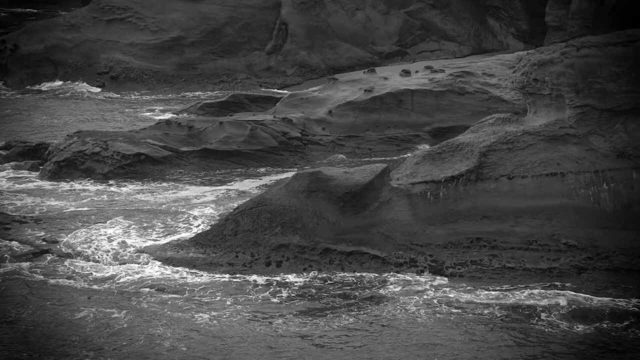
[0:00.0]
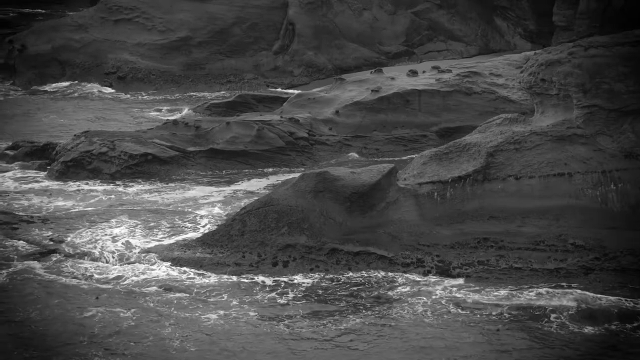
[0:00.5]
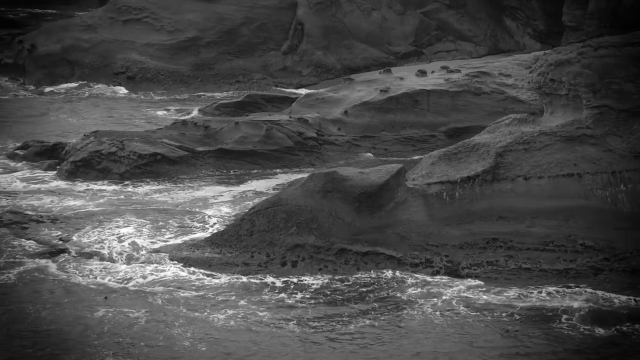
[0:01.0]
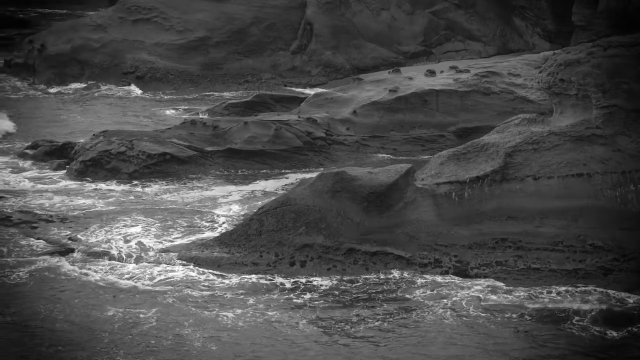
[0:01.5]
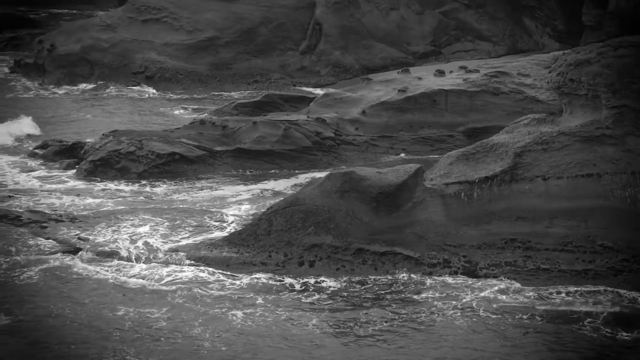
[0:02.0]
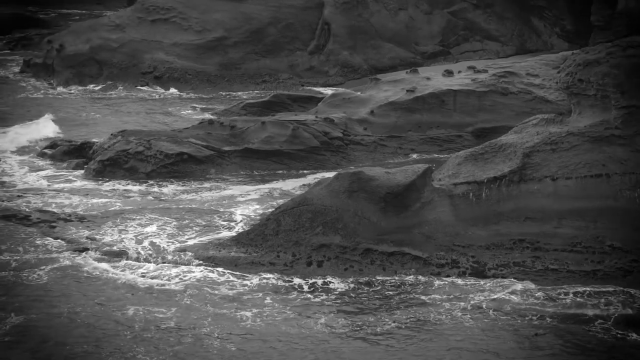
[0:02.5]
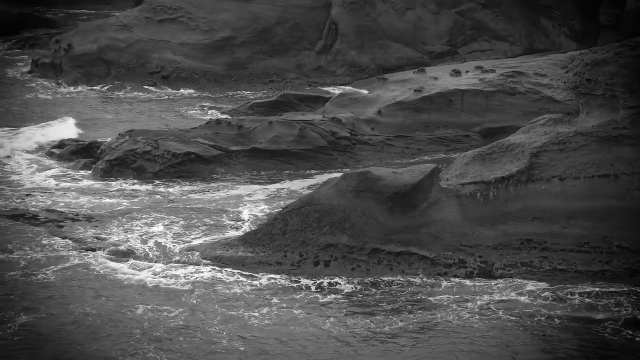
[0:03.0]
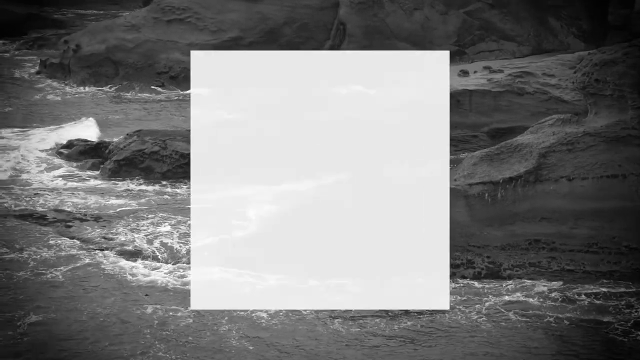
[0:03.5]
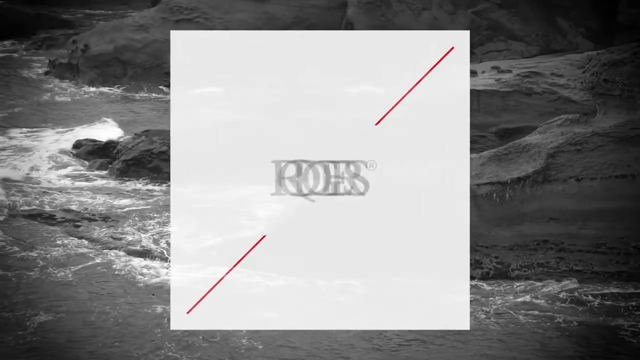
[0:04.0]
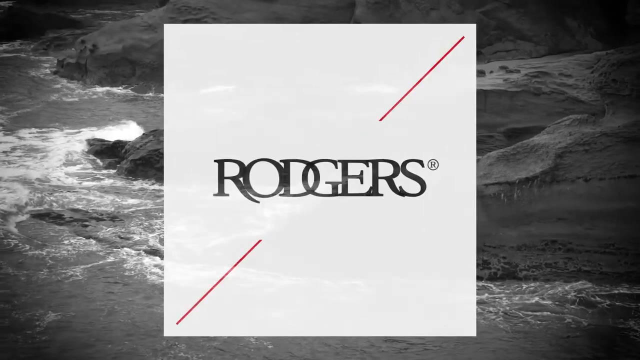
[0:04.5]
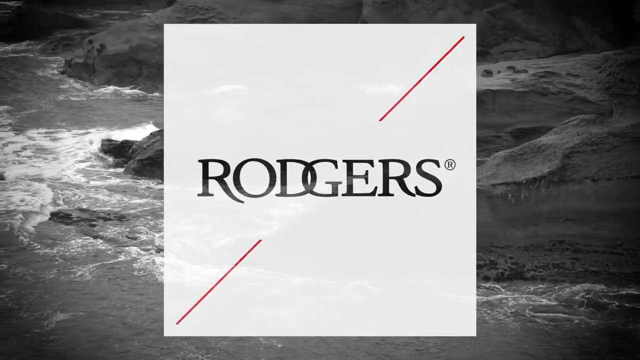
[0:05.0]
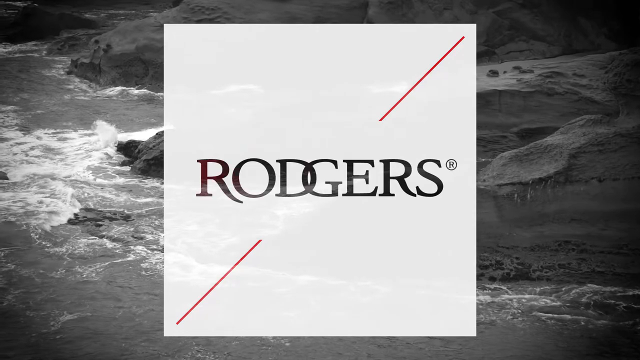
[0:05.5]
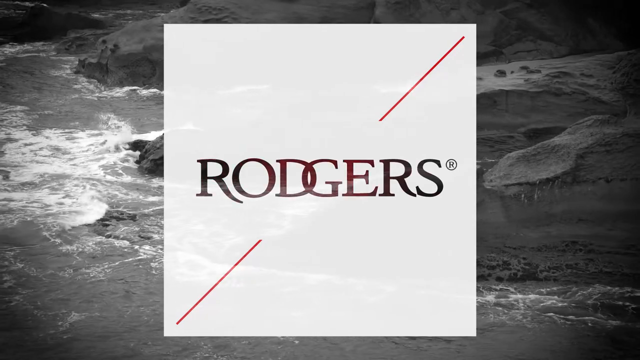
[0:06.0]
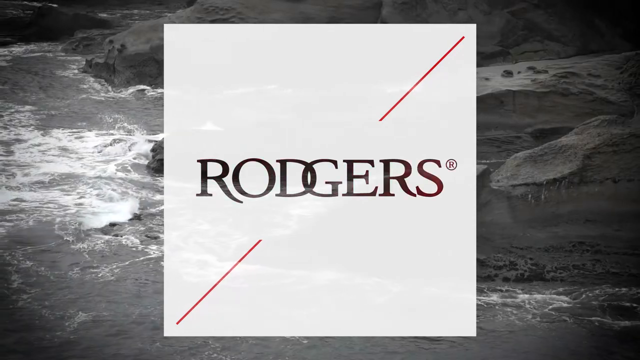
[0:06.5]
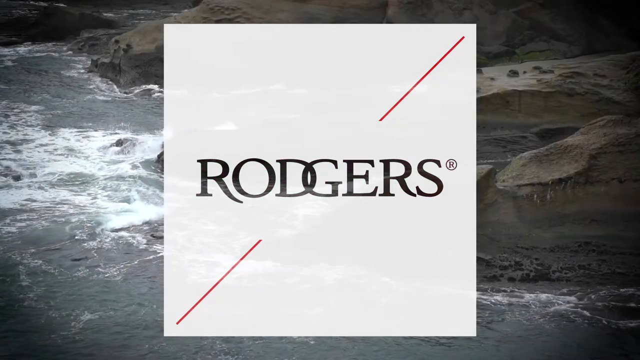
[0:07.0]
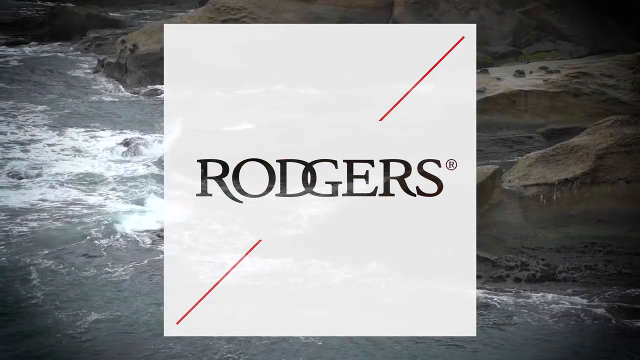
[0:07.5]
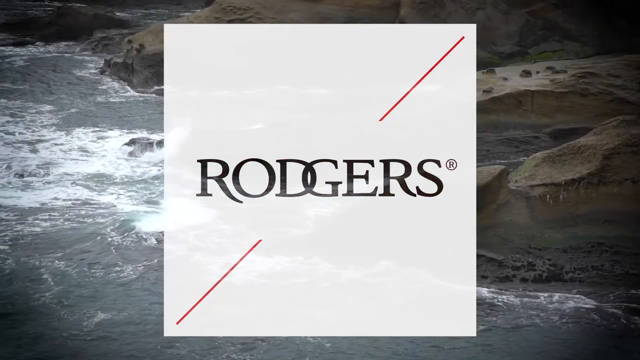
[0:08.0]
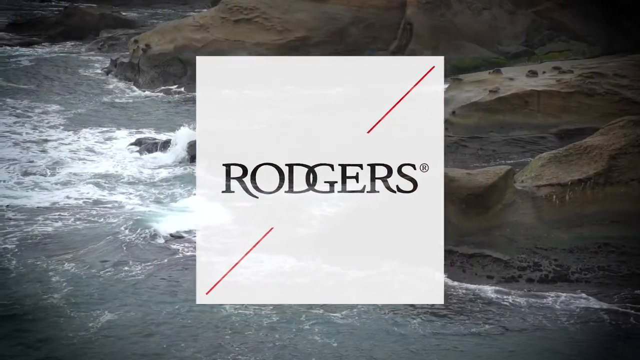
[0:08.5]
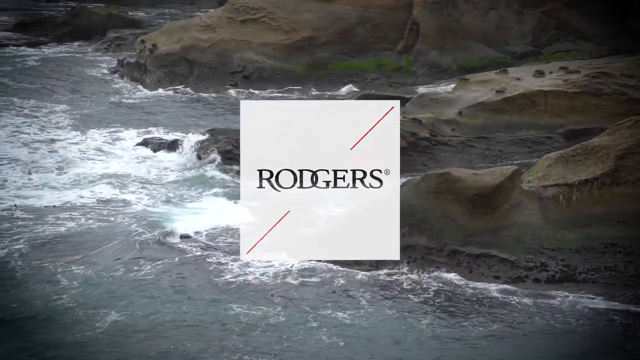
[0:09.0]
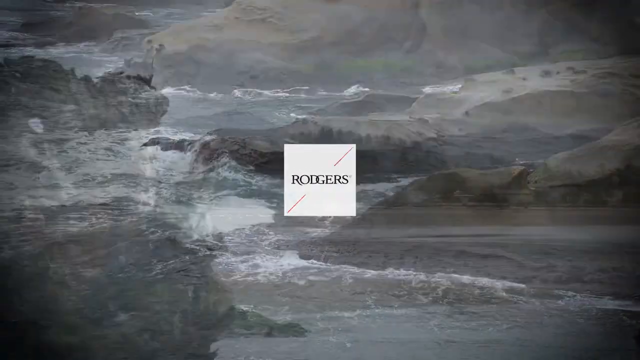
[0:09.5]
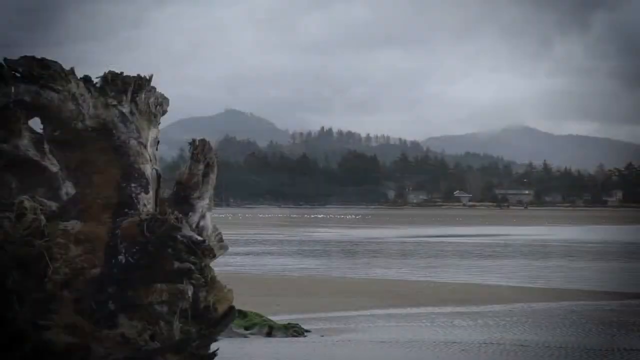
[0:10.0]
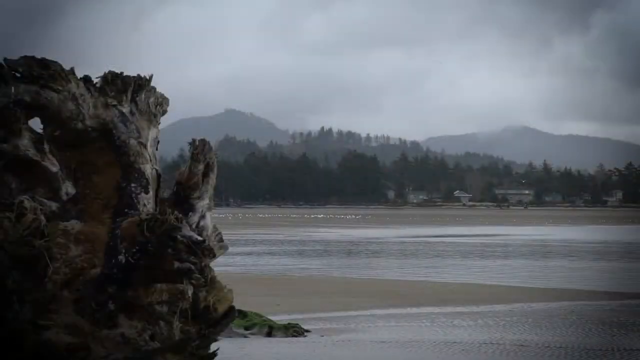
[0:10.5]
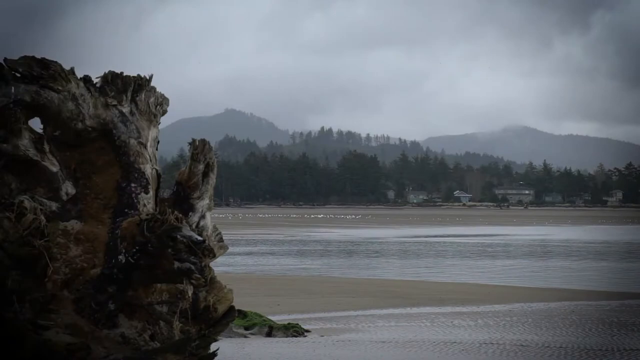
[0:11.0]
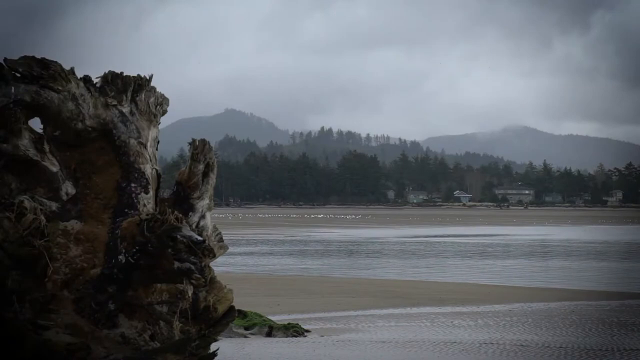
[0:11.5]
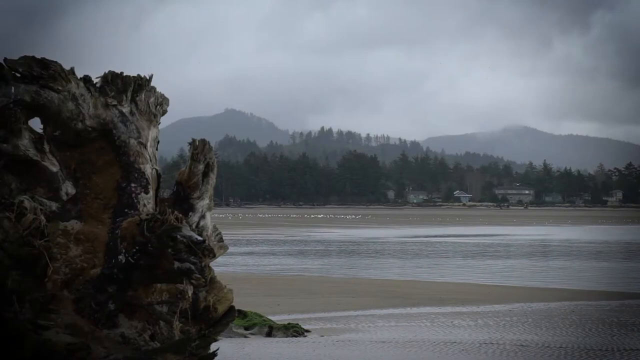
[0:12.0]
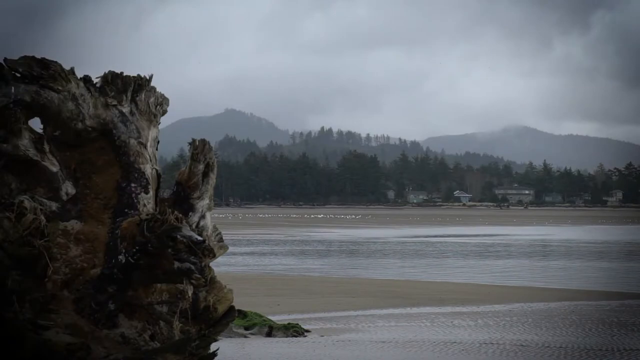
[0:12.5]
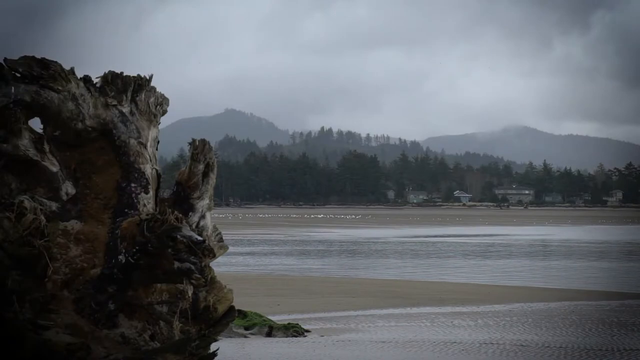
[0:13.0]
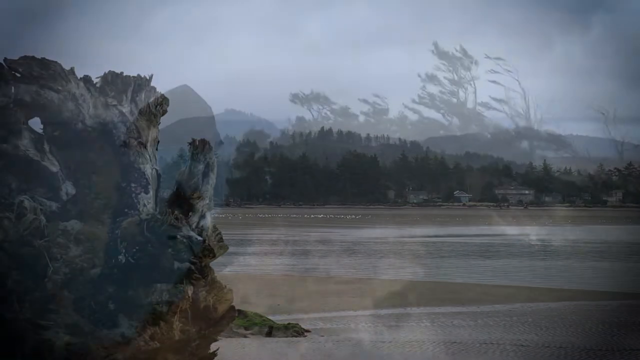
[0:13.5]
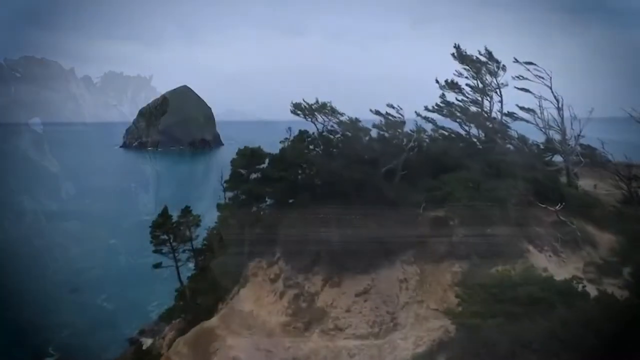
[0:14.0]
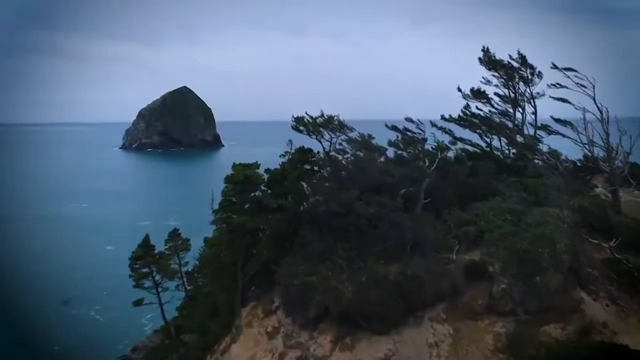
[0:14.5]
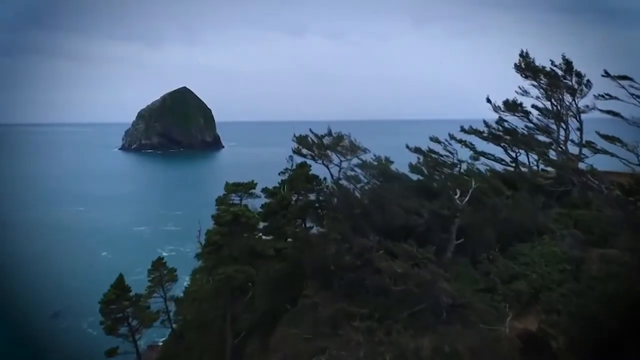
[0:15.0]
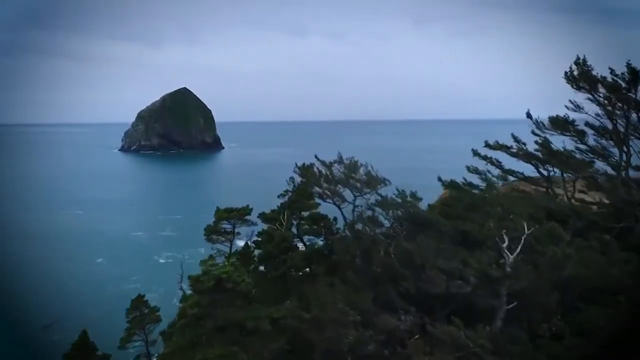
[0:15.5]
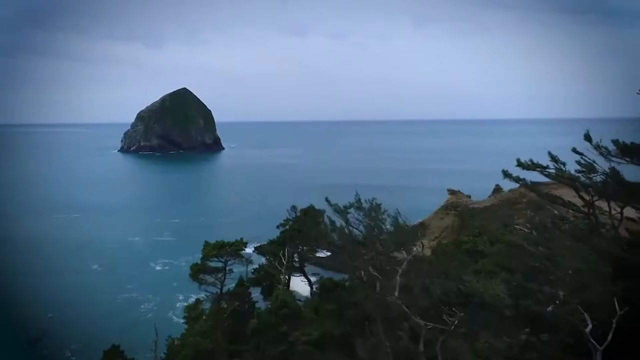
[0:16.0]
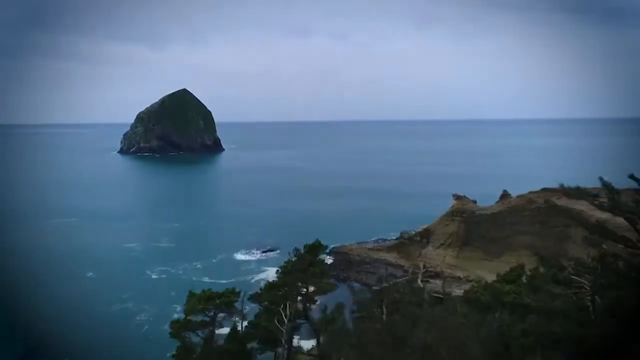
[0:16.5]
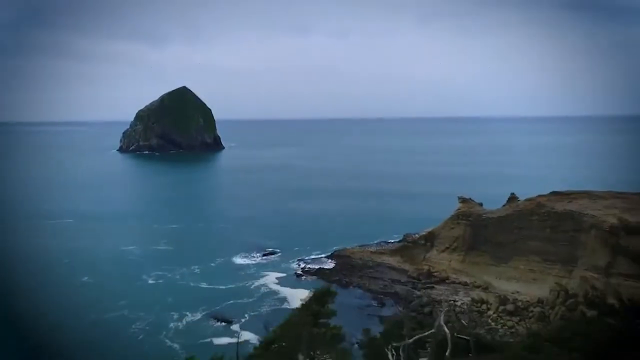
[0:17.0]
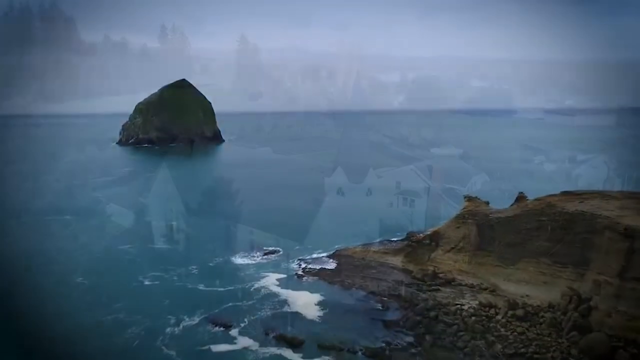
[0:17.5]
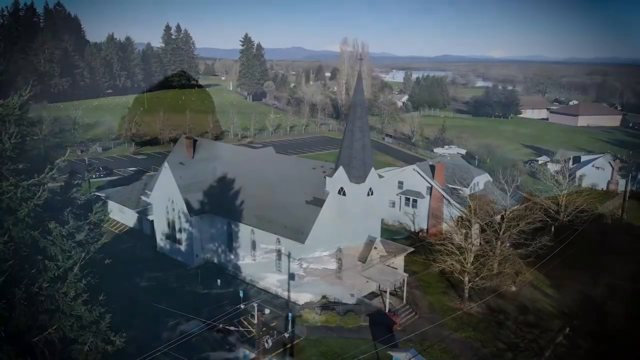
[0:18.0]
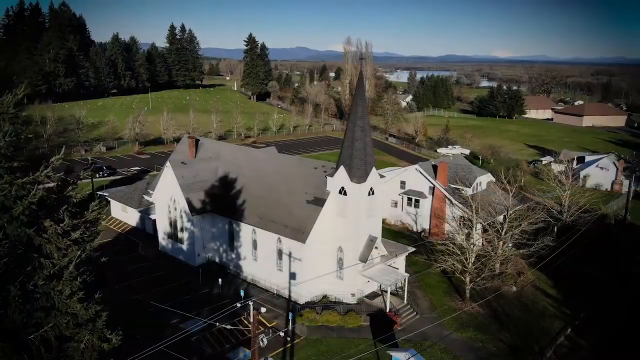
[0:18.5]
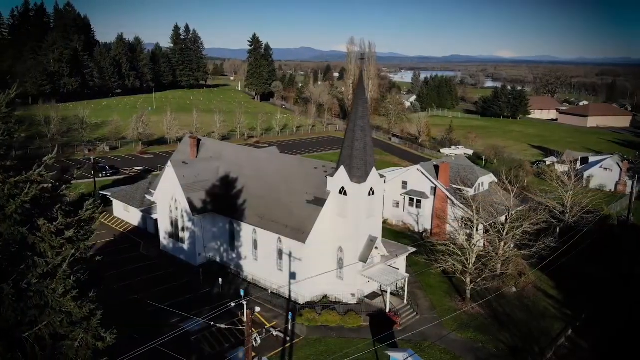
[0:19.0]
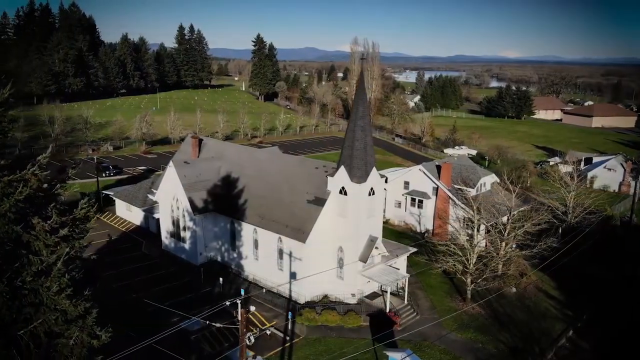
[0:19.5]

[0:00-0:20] The video opens with an aerial view of a rocky seashore in black and white. Spits of land jut out into the ocean, and the land itself has steep hills. Two large areas with points on them are visible, and behind them another area fades into the distance. The land looks either sandy or rocky. The land is on the right of the screen and the ocean on the left; the ocean has a very strong current, and waves are coming in. A white center square pops up with the word "Rodgers" in the middle, the D and the G in the middle of the word connected, and a diagonal red line running through it from the lower left to the upper right. The scene changes to a seashore with sand flats visible and some white gulls in the distance. The tide is apparently out, and some bits of water are visible at the front of the shot. On the left there is a rocky outcropping, and behind it in the distance are lines of fir trees, smaller hills, and higher hills in the background. The sky is cloudy, and some houses built on the beach are visible in the distance. Next comes an aerial shot over one of the rocky outcroppings, with scrub growing on top of it; in the distance a large rock juts up from the gray-blue ocean, and waves break around rocks. Then there is an overhead view of a white church with a steeple.